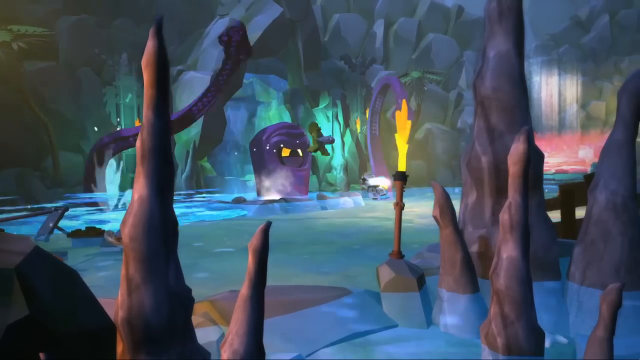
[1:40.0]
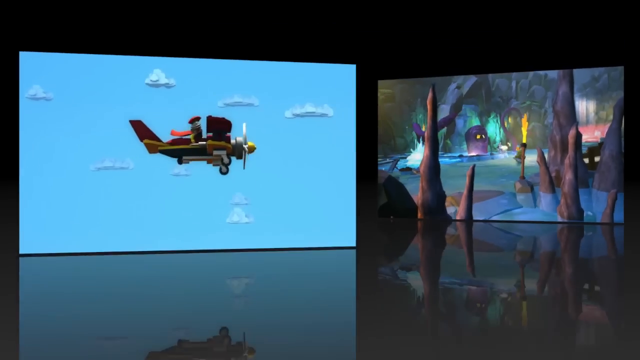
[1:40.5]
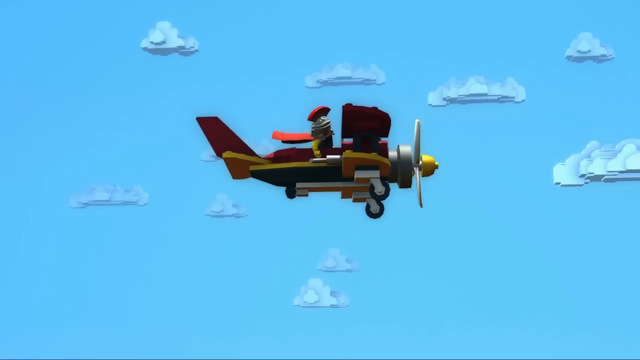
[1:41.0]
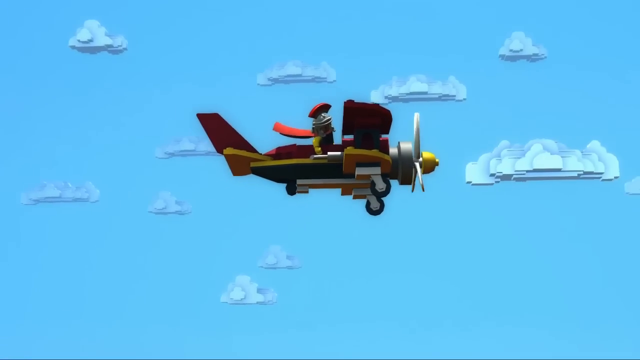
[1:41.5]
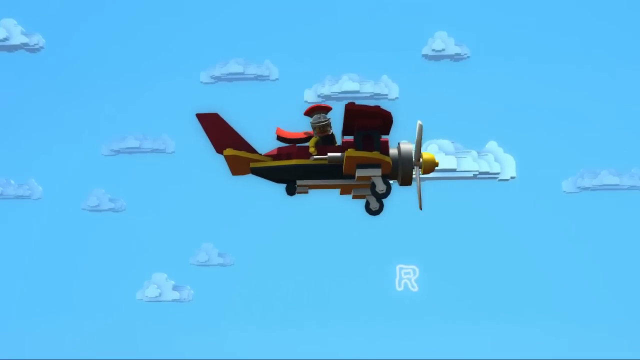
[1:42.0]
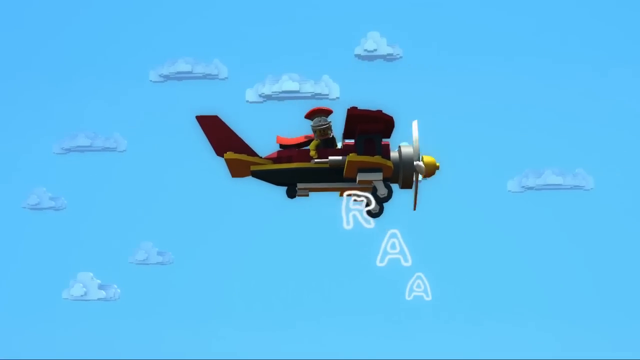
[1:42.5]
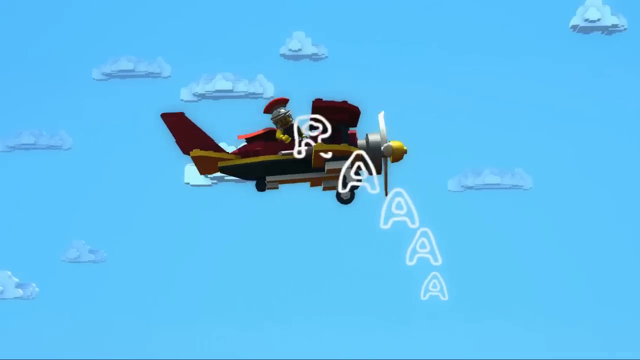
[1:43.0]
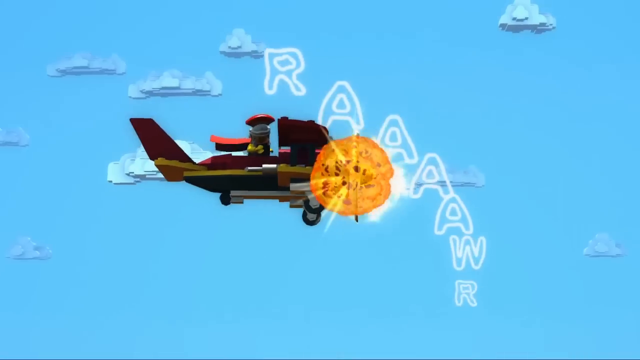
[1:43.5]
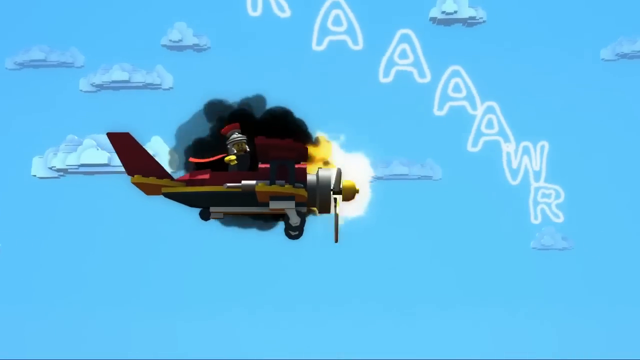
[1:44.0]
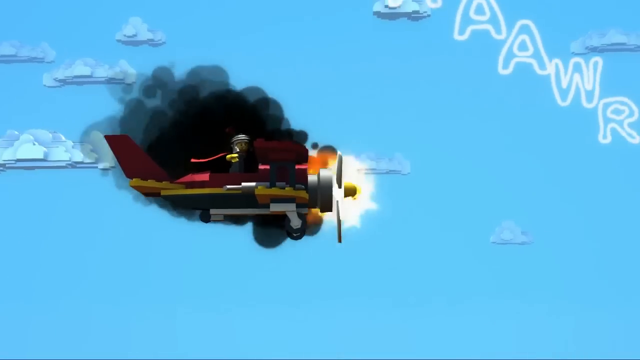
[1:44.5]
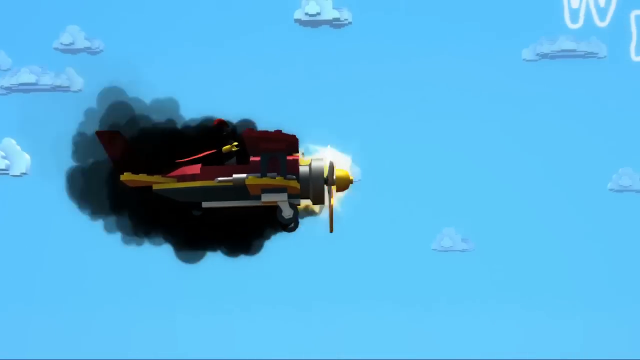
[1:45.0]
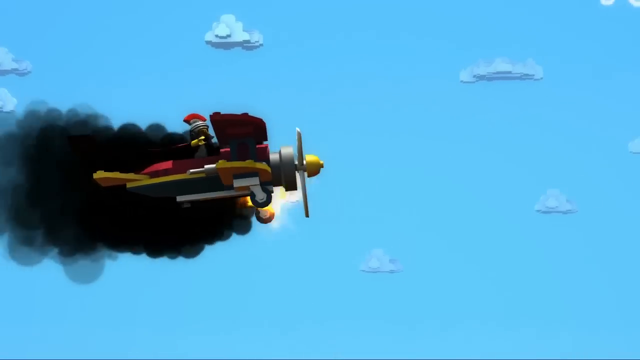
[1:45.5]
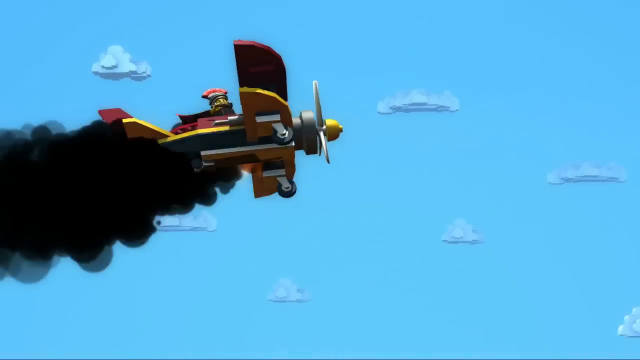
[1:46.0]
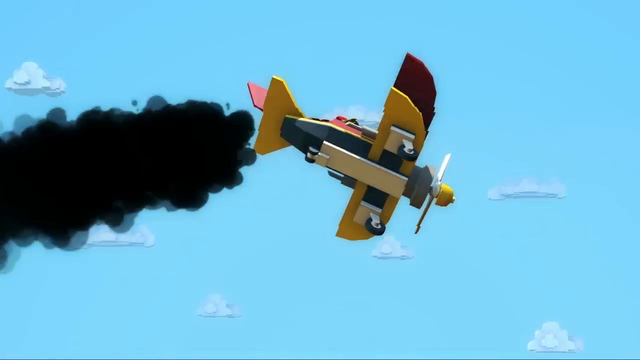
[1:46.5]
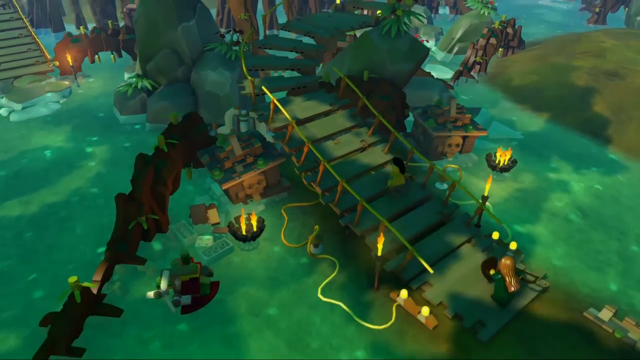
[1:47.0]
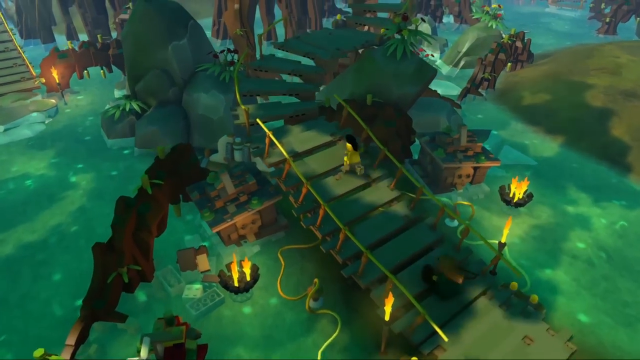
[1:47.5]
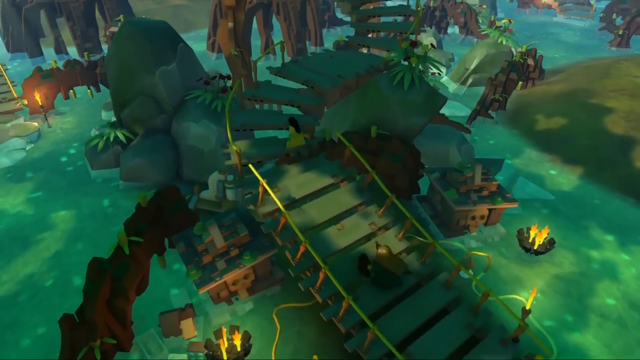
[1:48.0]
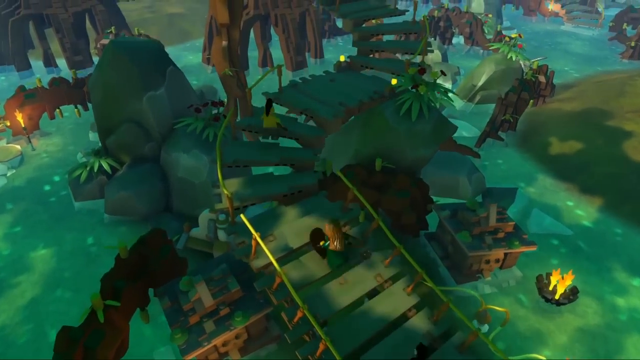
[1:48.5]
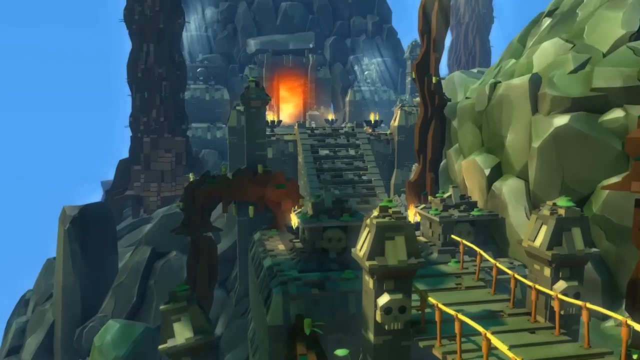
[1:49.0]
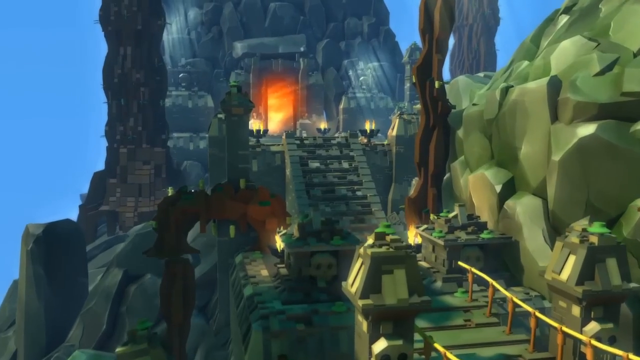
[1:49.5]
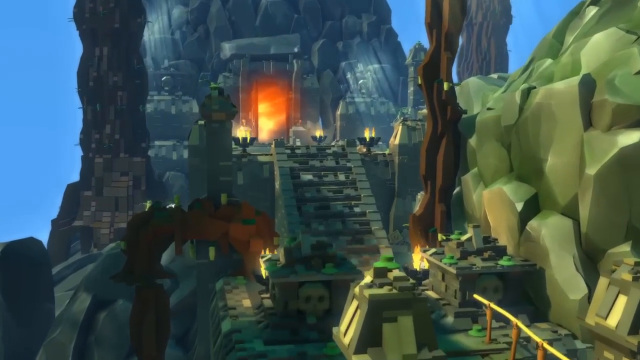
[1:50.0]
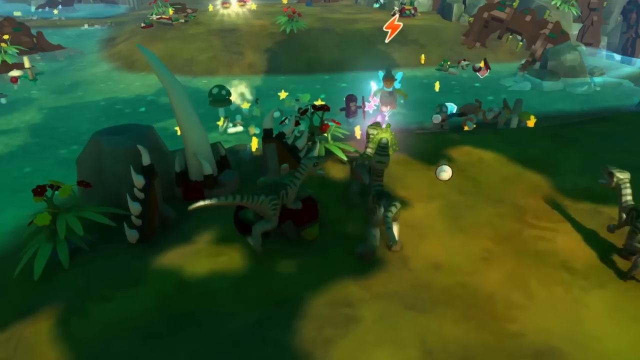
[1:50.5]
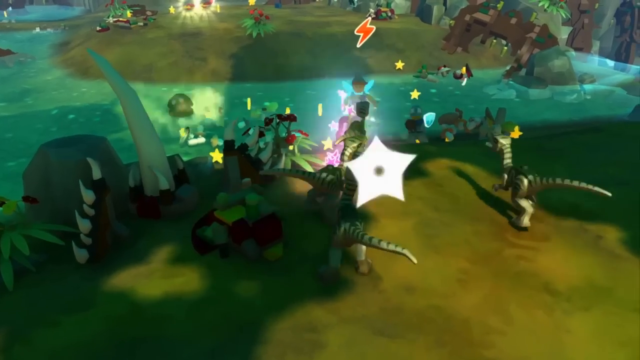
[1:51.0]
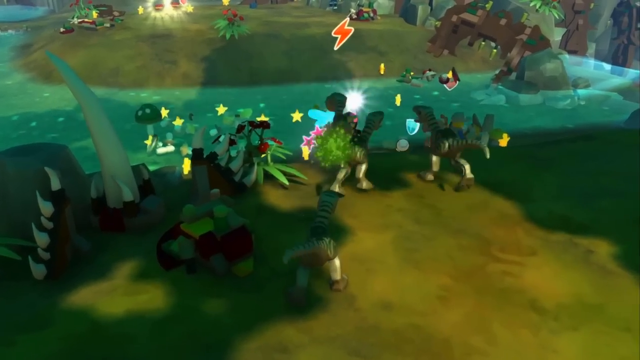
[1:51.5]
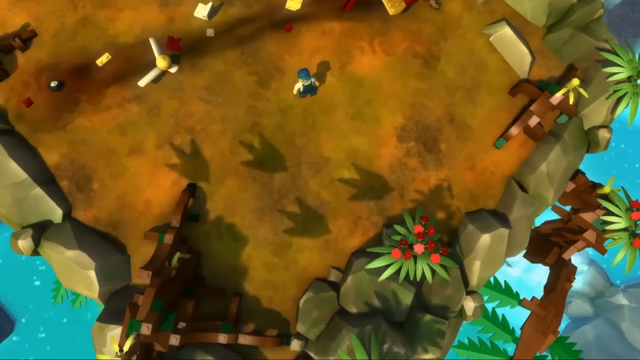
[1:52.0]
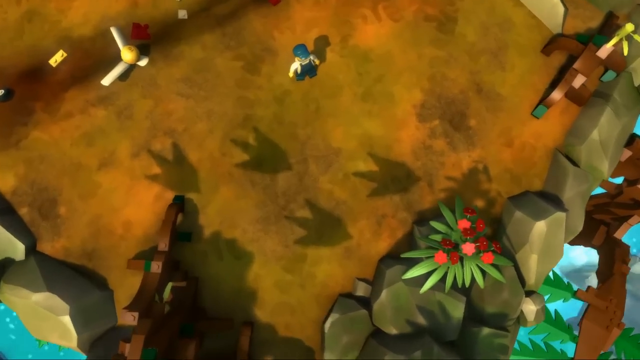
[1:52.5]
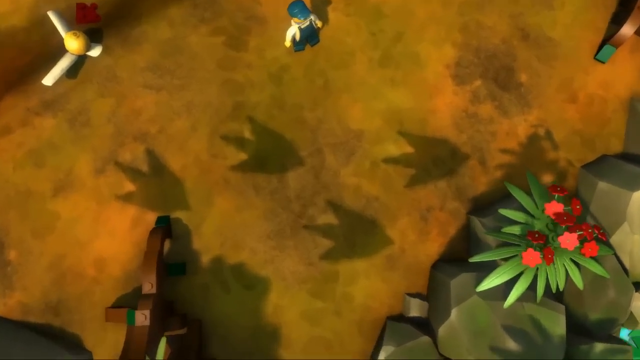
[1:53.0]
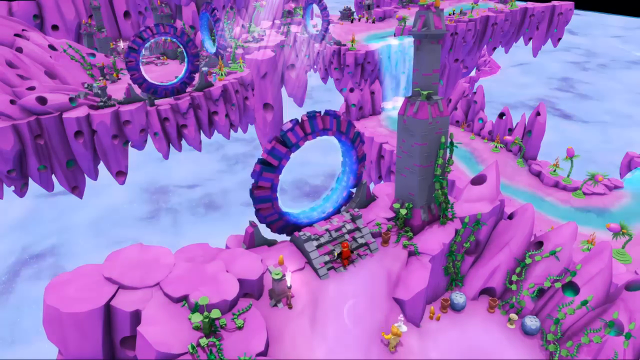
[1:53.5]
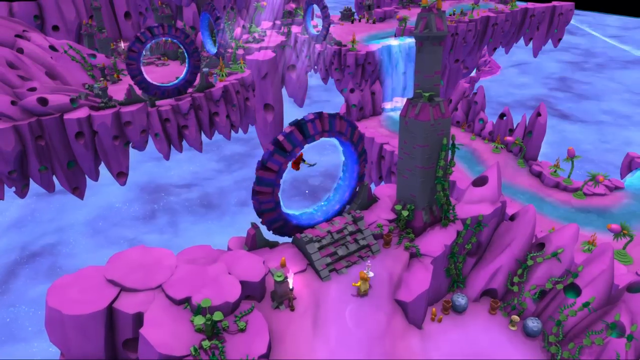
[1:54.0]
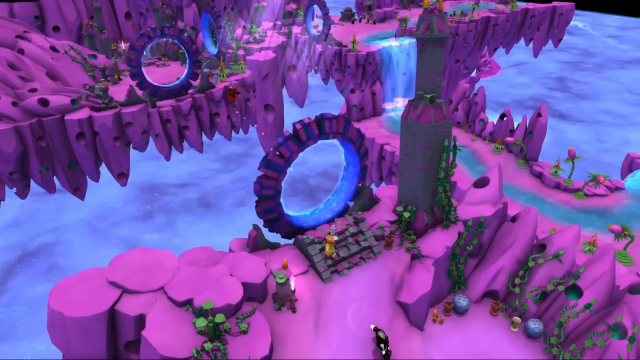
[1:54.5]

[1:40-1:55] The scene switches to the sky, where a man in a red hat and scarf rides an old-fashioned, very small airplane among the clouds. White text appears saying "R-A-A-A-A-W-R" as his plane explodes in black smoke and starts to turn downward. A watery cove appears again with some skulls and fire, and two characters run up steps. In possibly the same setting, a different shot shows more steps, skulls and fire leading to some sort of larger building. In a cove, dinosaurs on the ground run after characters who protect and defend themselves with their weapons in the water. A bird's-eye view shows ground with four giant dinosaur footmarks and one LEGO man, and the camera zooms in on the footmarks. Then a magenta rocky area appears with a large blue and purple ring that characters jump through to get to the other side.